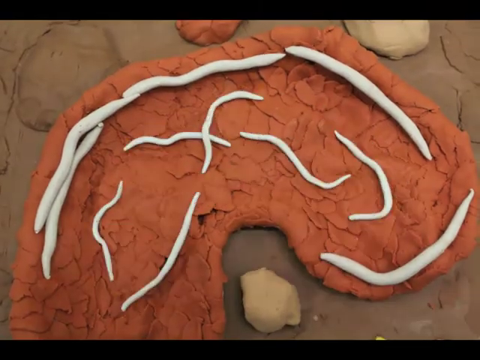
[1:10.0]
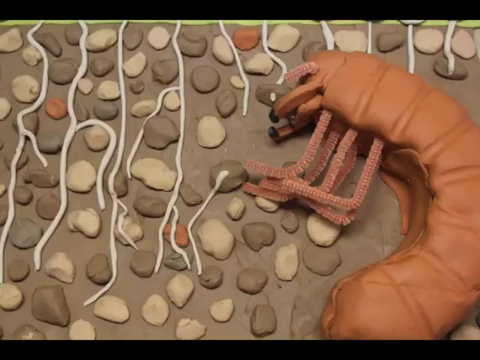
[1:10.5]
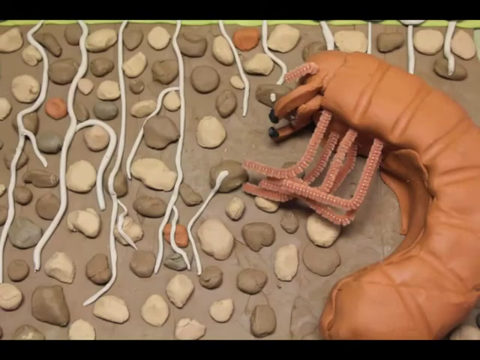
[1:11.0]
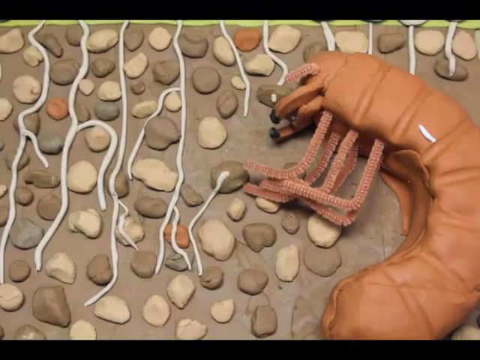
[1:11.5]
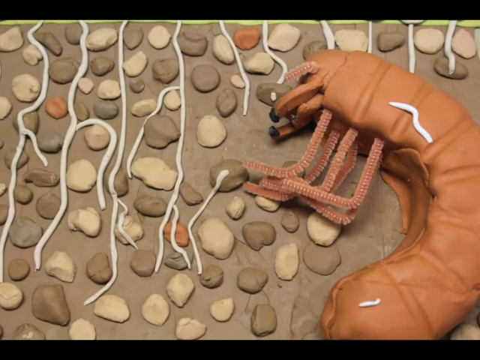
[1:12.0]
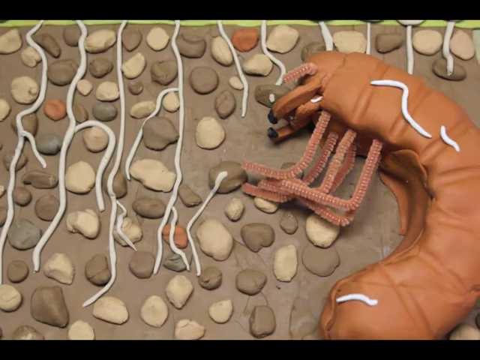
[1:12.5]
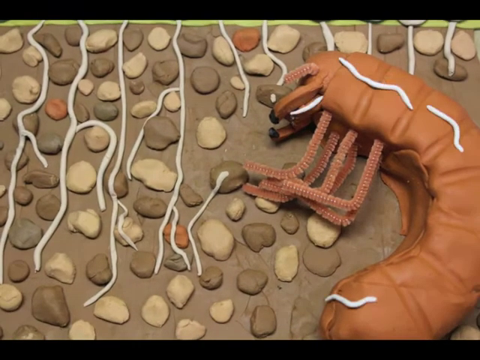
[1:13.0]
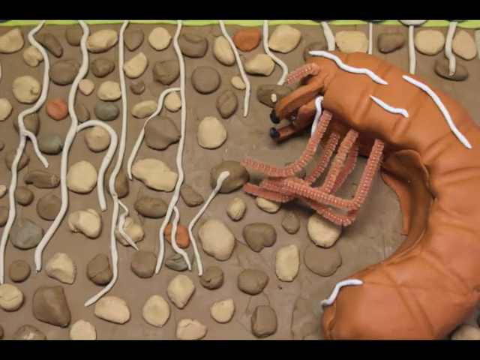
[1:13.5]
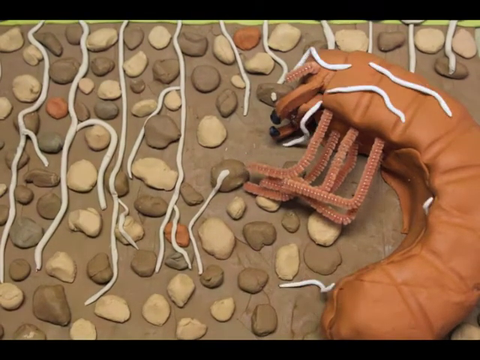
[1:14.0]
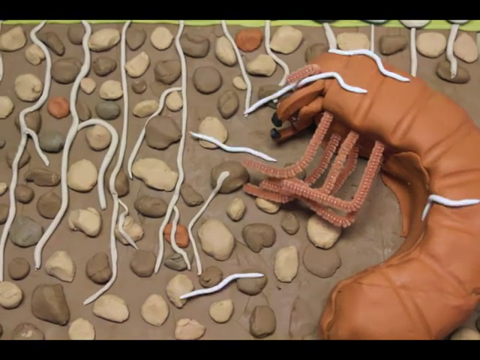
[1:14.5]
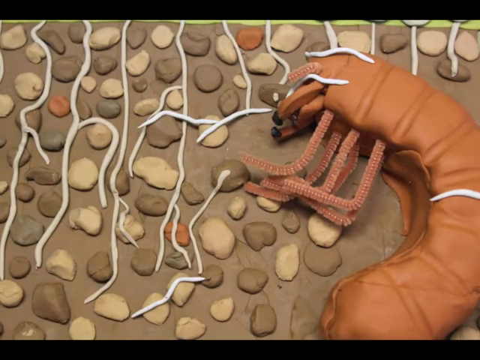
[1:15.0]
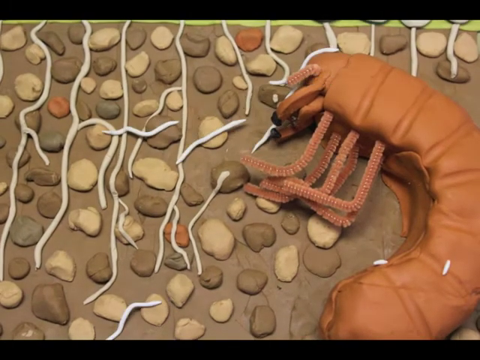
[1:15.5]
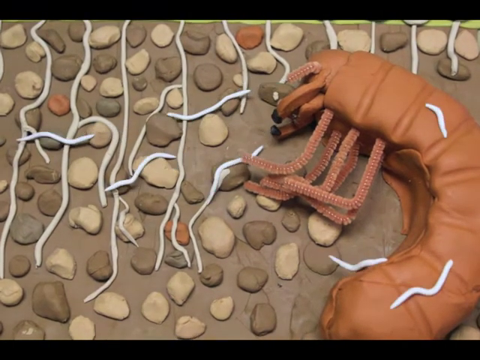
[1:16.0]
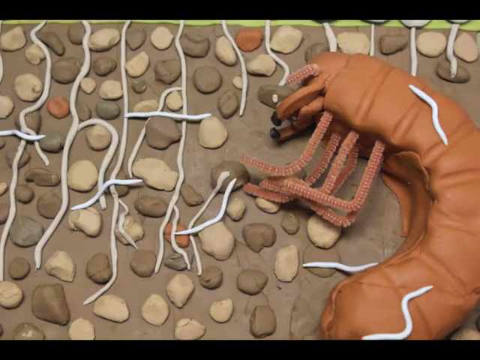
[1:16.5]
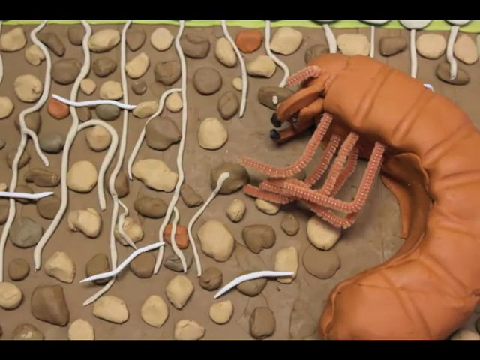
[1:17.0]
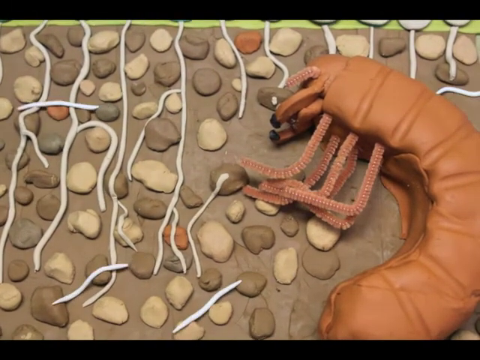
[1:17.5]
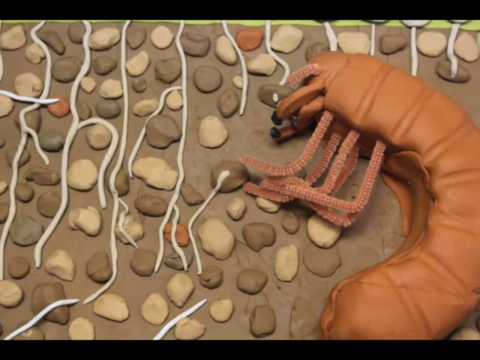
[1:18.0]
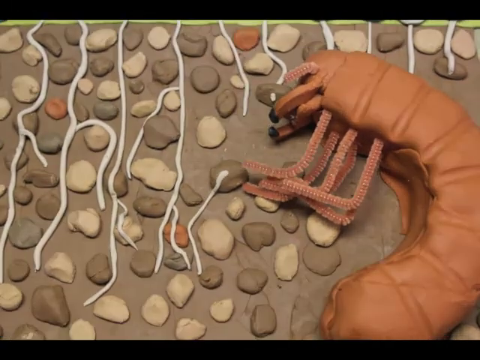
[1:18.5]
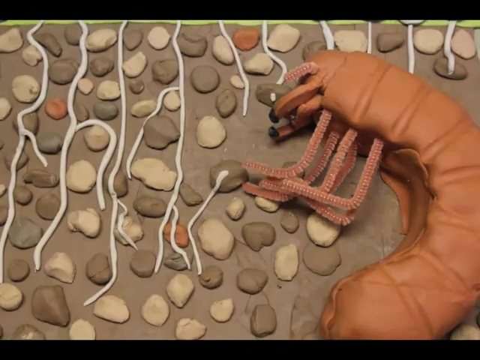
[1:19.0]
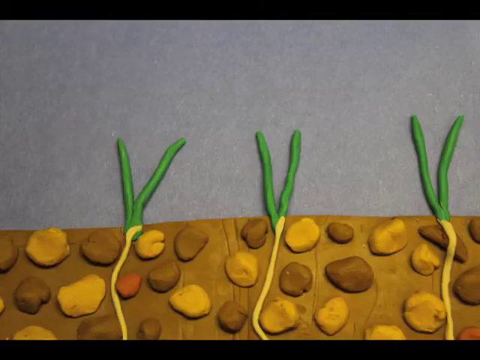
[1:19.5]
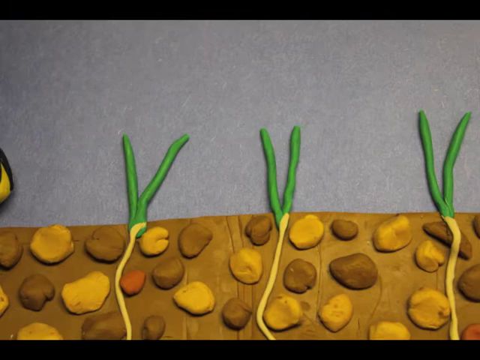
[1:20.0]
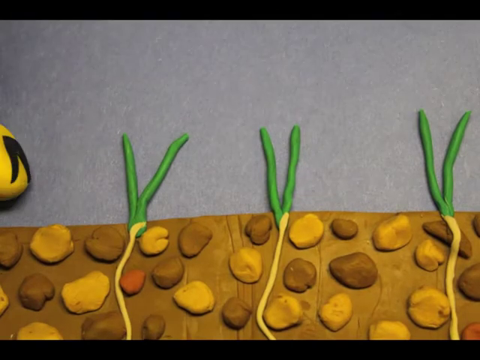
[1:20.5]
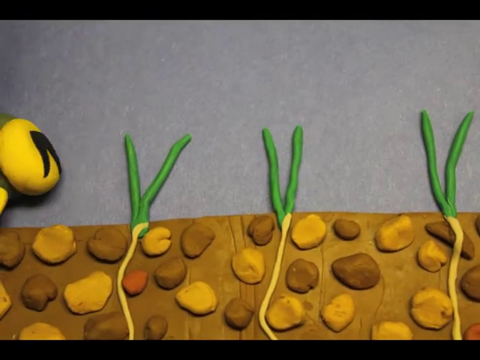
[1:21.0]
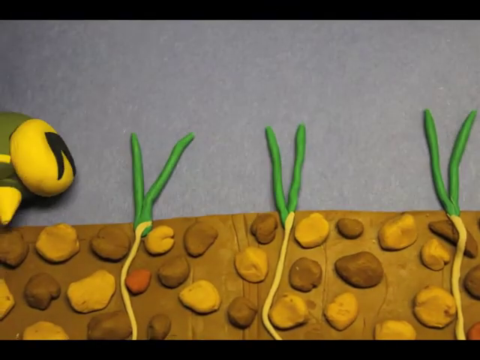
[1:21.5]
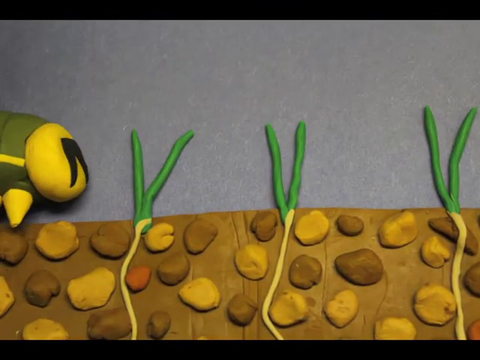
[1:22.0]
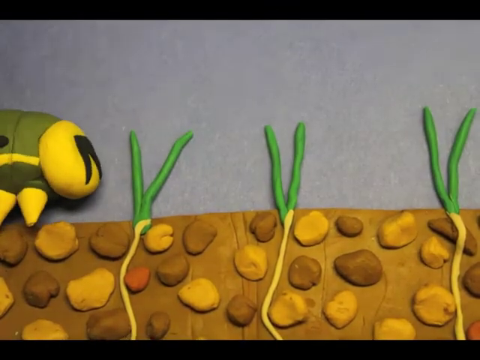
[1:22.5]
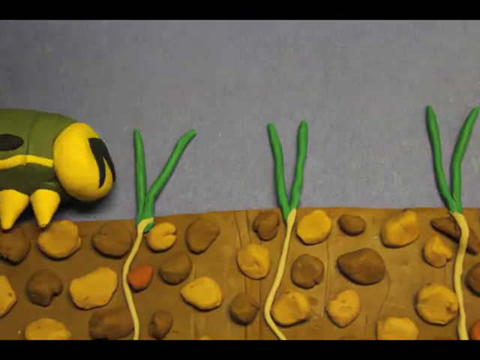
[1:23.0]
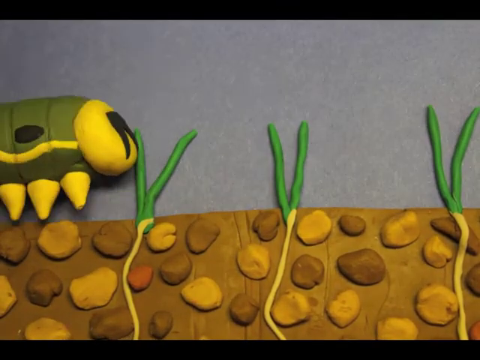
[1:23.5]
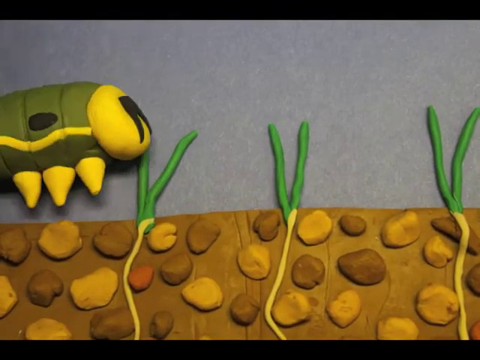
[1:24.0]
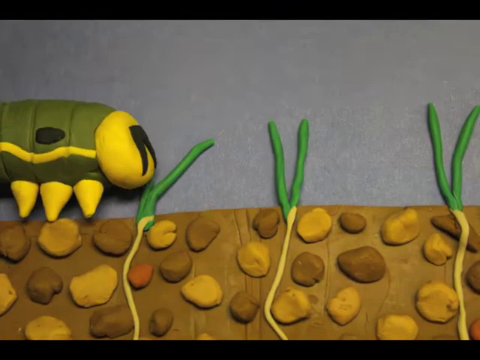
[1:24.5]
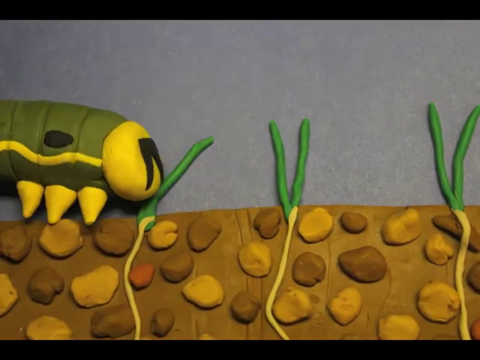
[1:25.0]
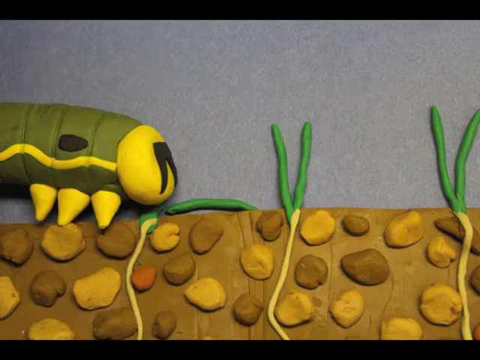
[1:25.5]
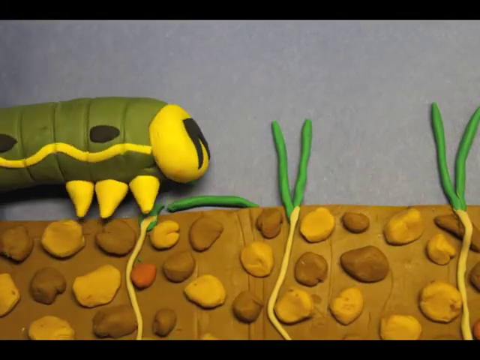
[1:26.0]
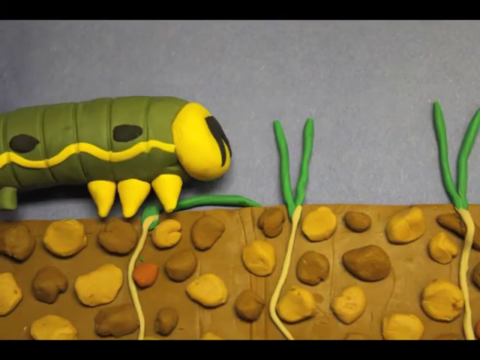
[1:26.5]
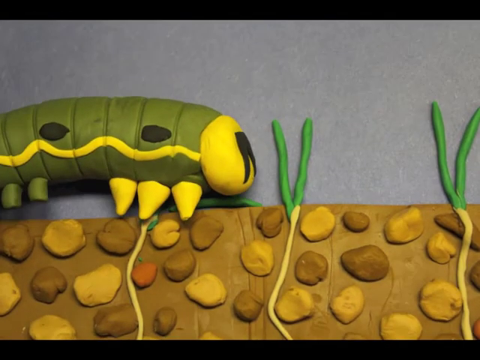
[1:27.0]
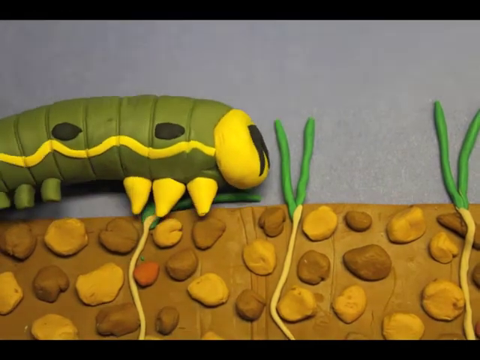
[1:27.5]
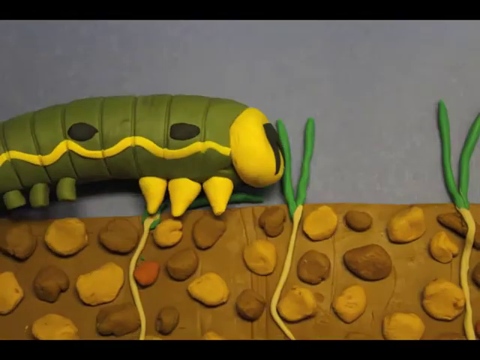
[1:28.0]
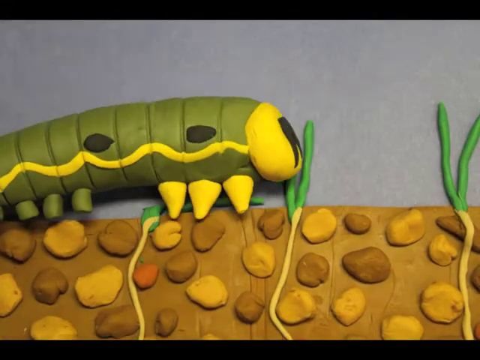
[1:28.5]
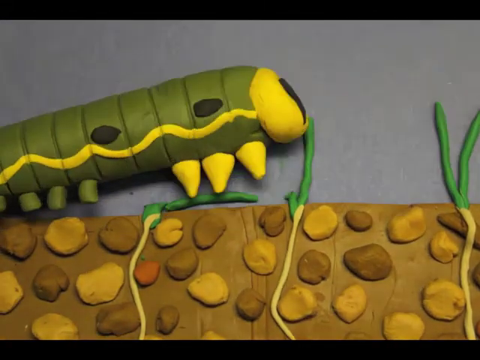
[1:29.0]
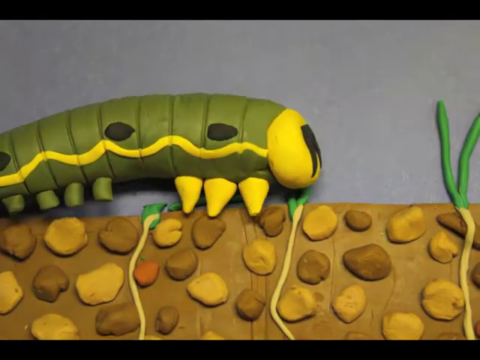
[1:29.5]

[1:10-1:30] The large worms are side by side with smaller, freshly hatched worms on top of the dead, partially digested larva. The background is soil made of dark and light brown clay and orange clay, with the plants' roots made of white clay. The larger entomopathogenic nematode is on the right side; it is no longer alive, and the white worms make their way out of its body, climbing out through its skin and mouth. Leaving the host's body, they move from right to left. Next, a caterpillar made of green, yellow and black clay enters from the left side of the screen, heading toward the plants, and makes a chewing motion, eating the plants as it moves across the screen.